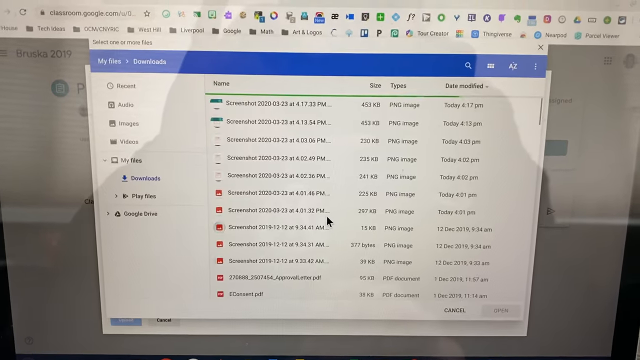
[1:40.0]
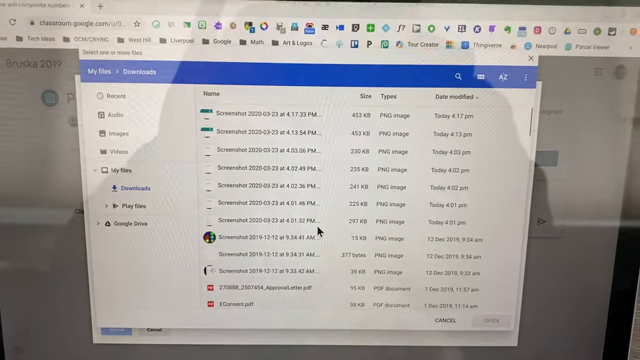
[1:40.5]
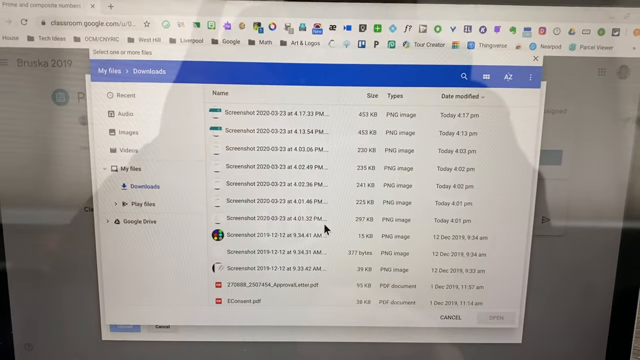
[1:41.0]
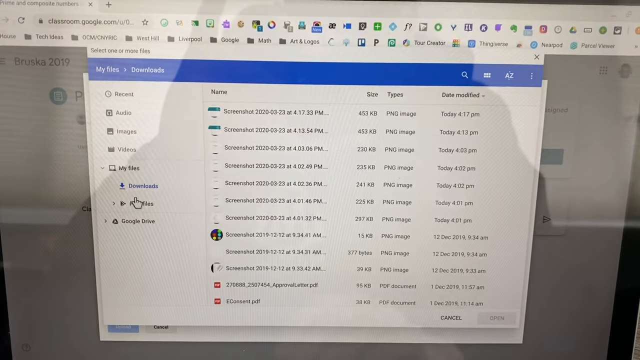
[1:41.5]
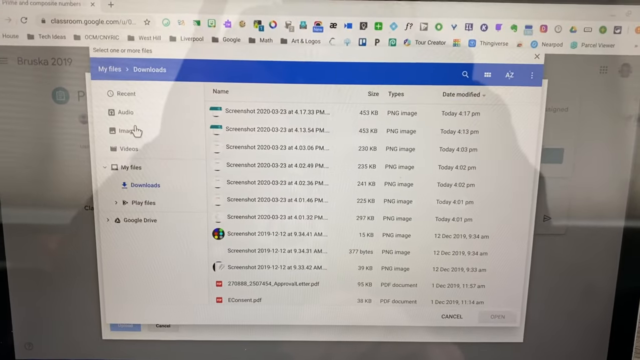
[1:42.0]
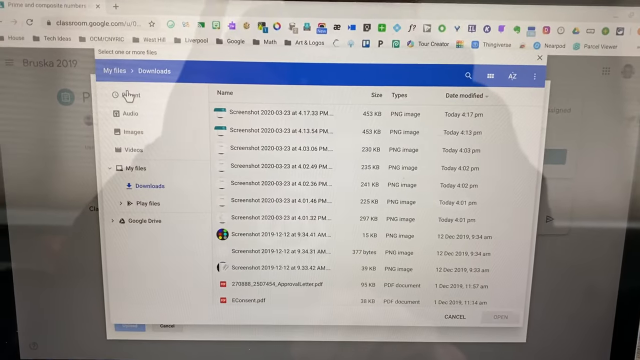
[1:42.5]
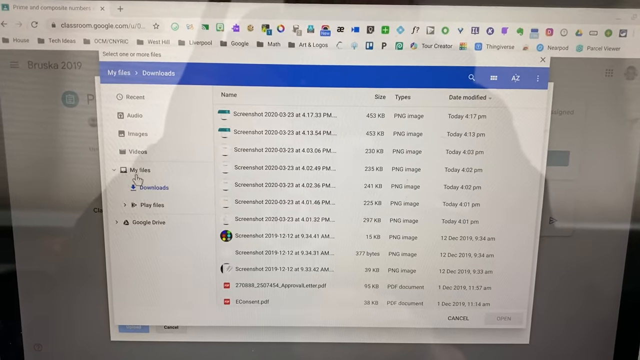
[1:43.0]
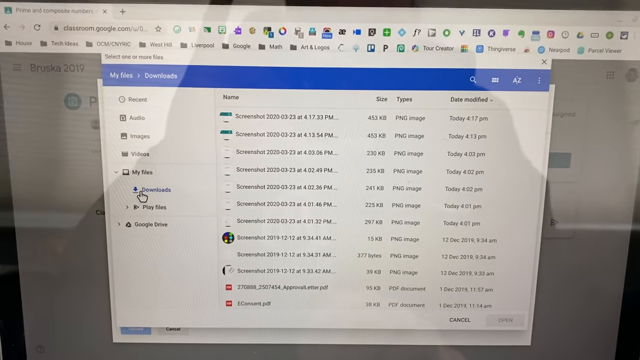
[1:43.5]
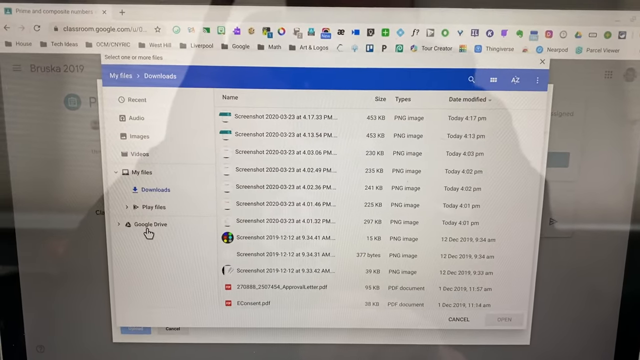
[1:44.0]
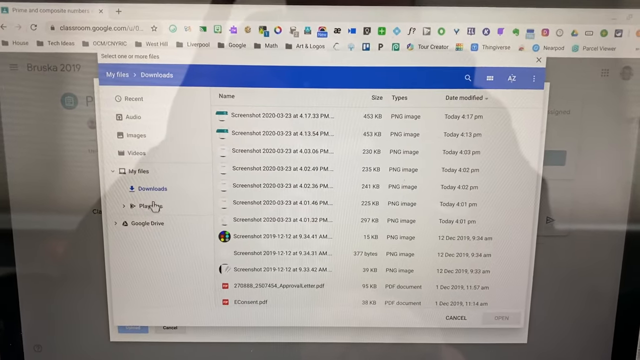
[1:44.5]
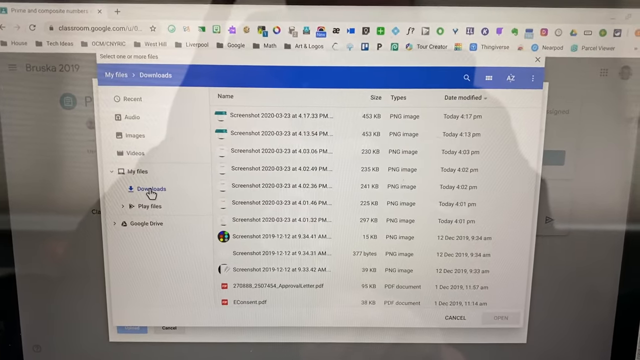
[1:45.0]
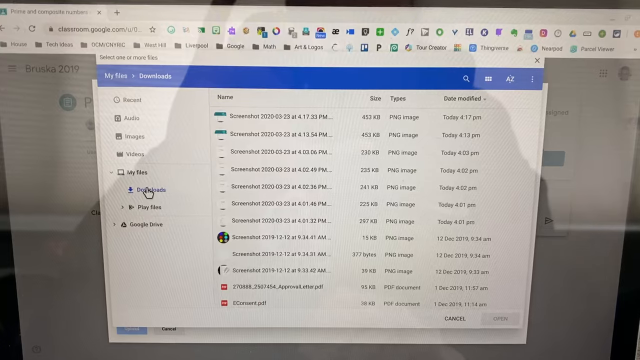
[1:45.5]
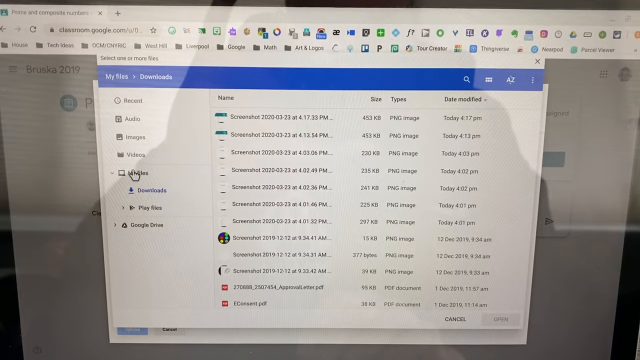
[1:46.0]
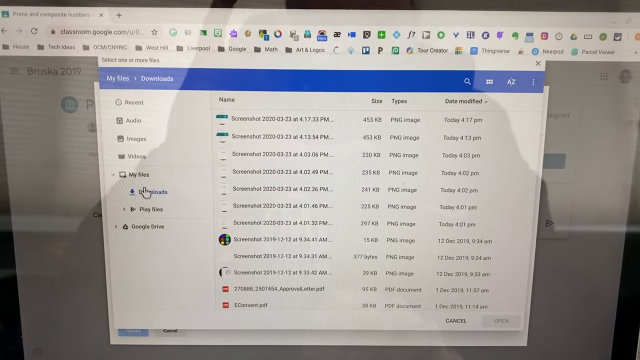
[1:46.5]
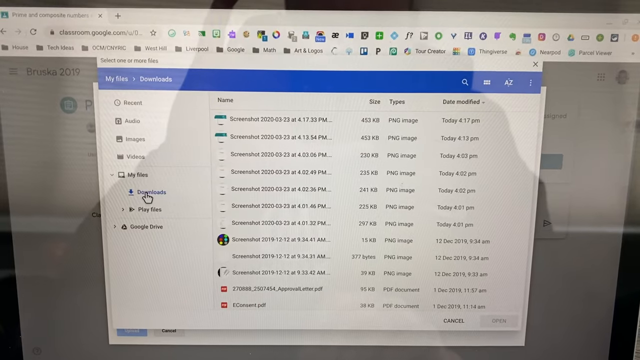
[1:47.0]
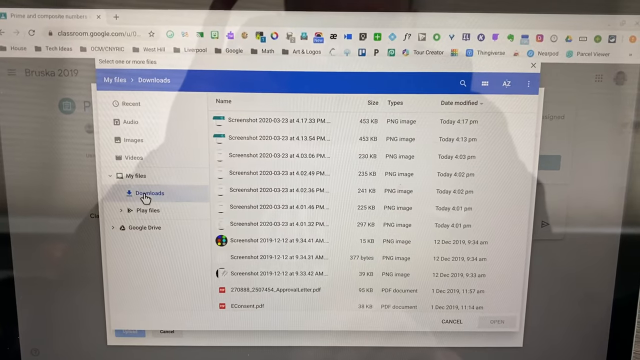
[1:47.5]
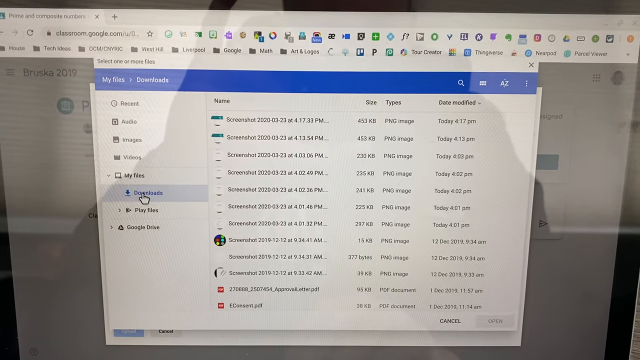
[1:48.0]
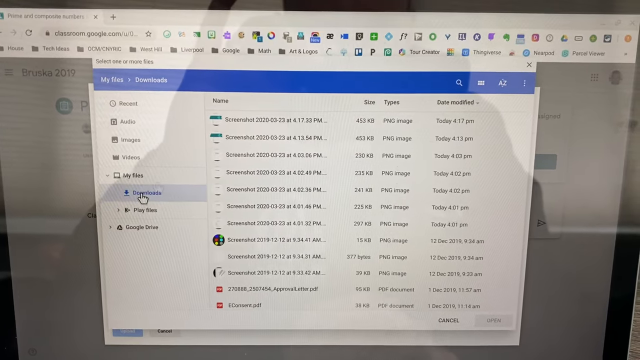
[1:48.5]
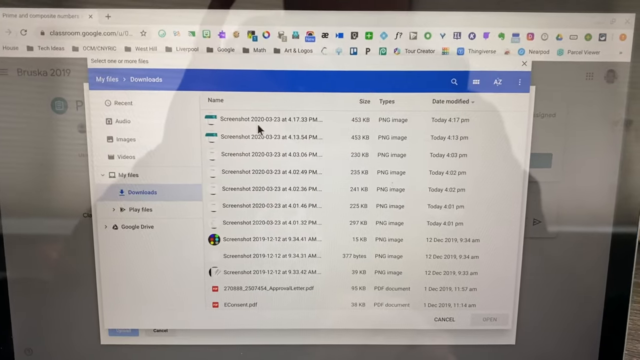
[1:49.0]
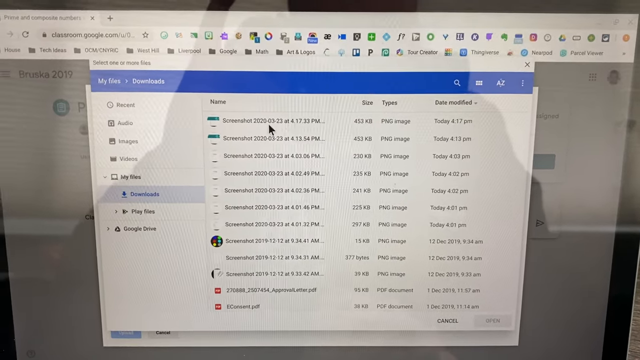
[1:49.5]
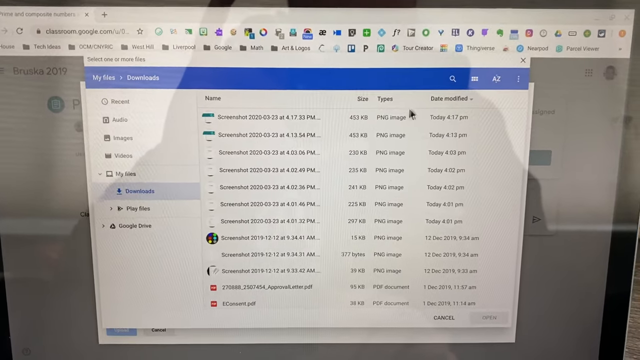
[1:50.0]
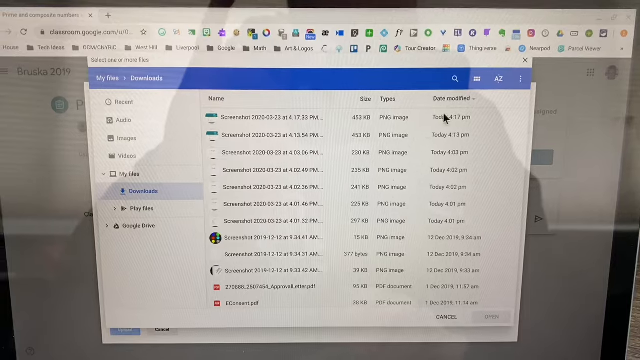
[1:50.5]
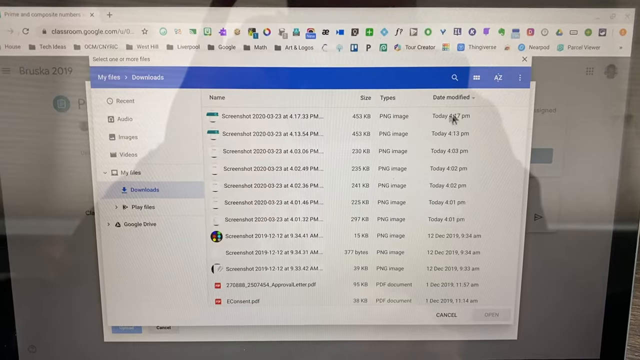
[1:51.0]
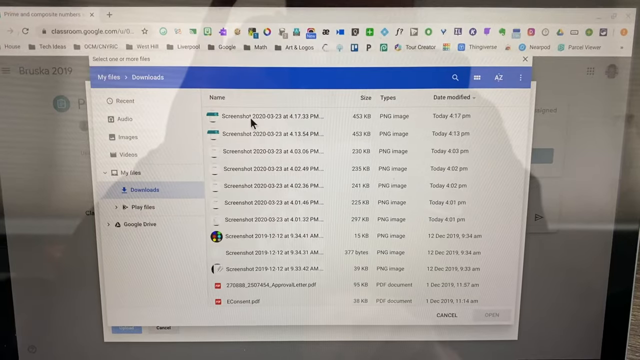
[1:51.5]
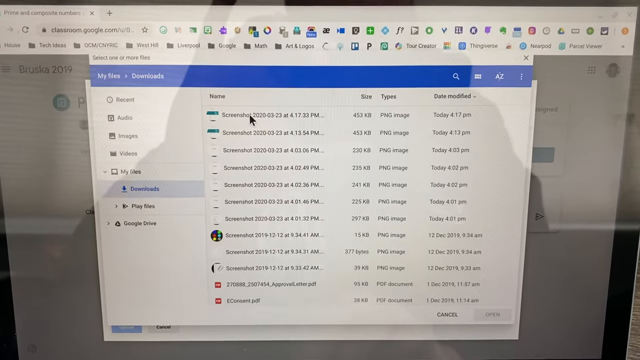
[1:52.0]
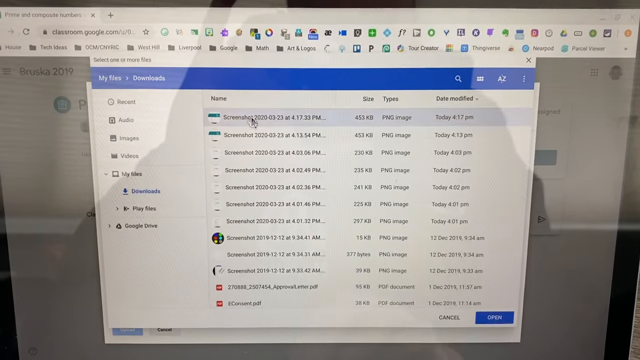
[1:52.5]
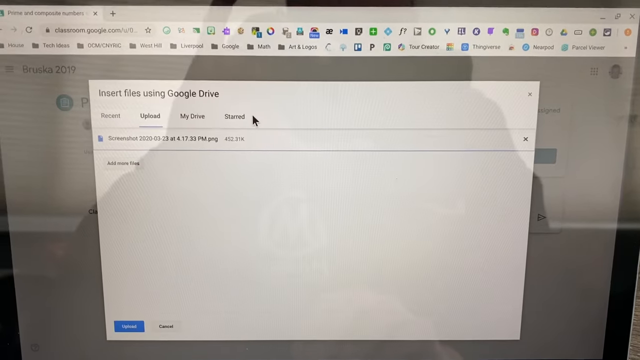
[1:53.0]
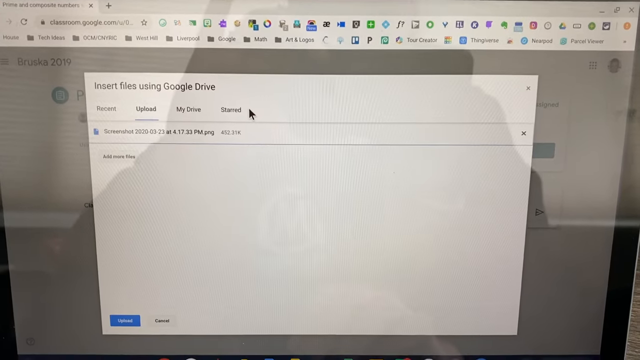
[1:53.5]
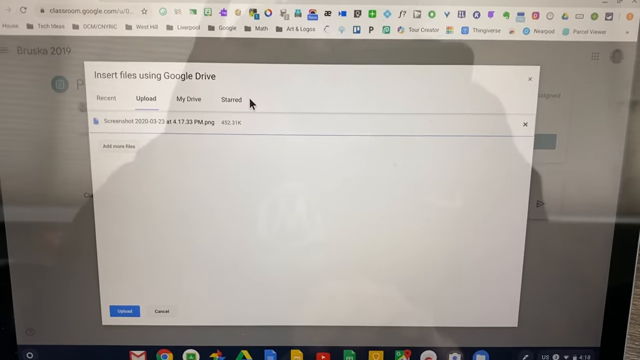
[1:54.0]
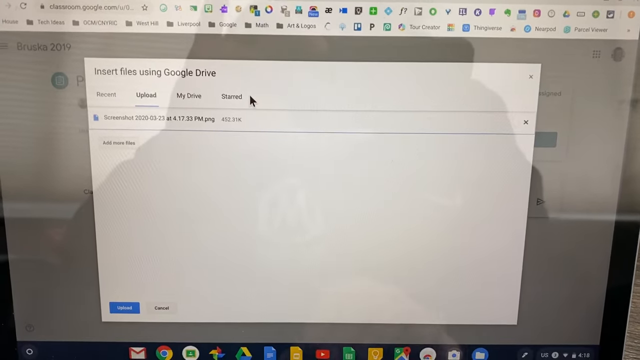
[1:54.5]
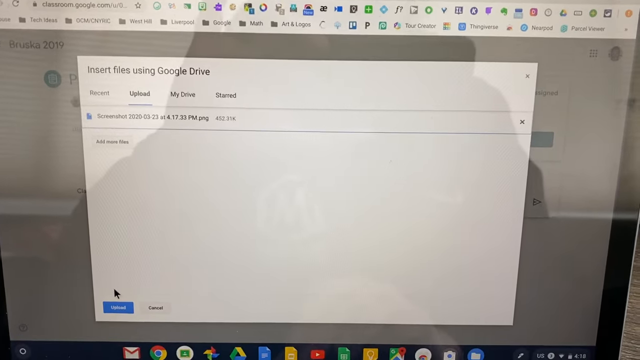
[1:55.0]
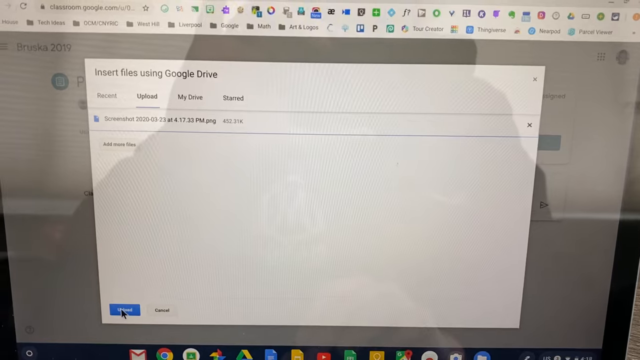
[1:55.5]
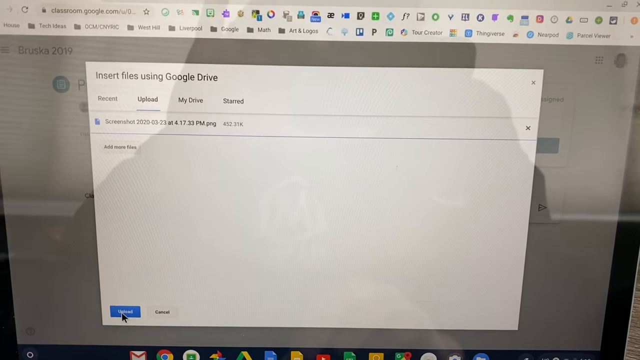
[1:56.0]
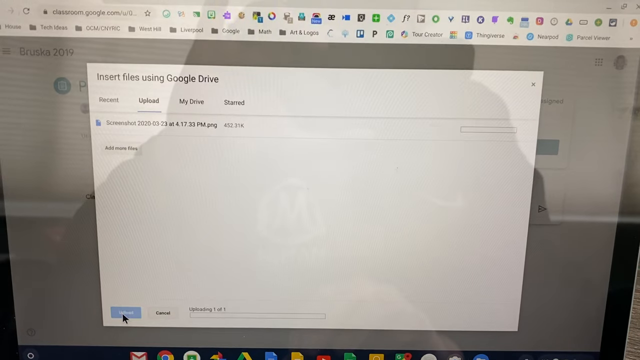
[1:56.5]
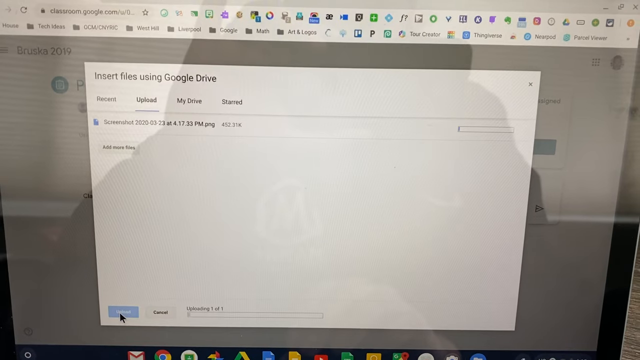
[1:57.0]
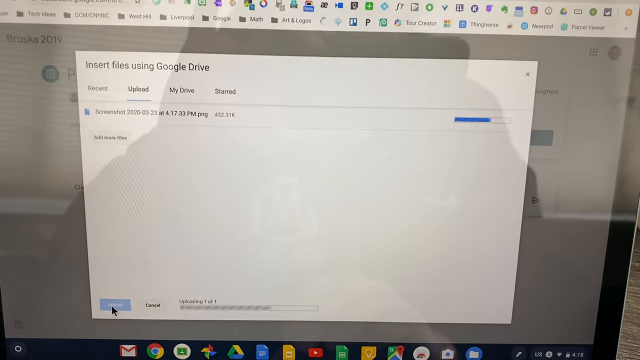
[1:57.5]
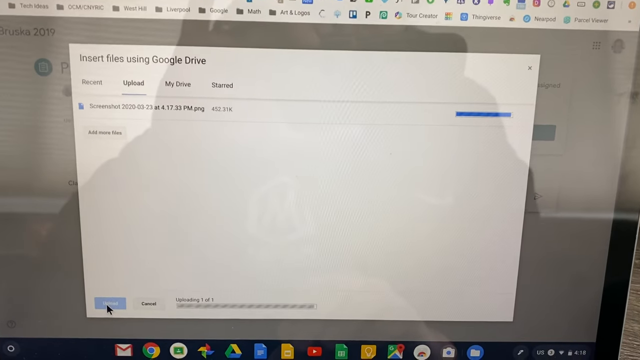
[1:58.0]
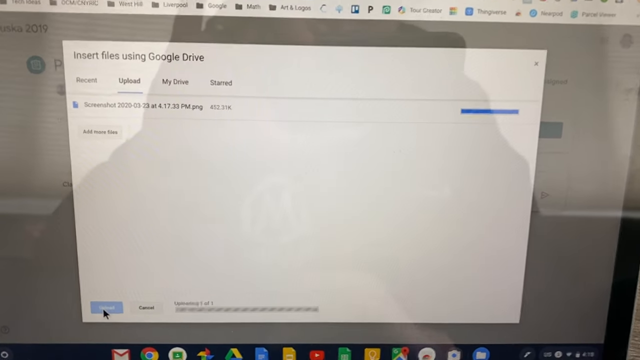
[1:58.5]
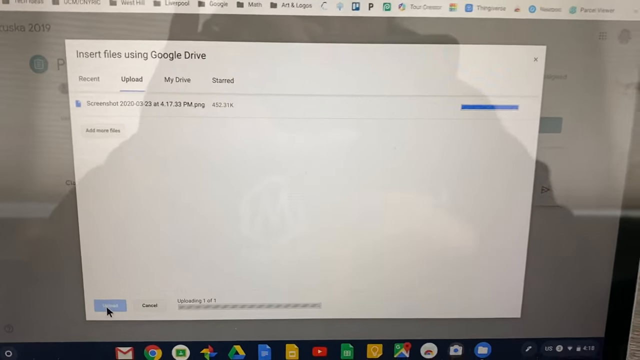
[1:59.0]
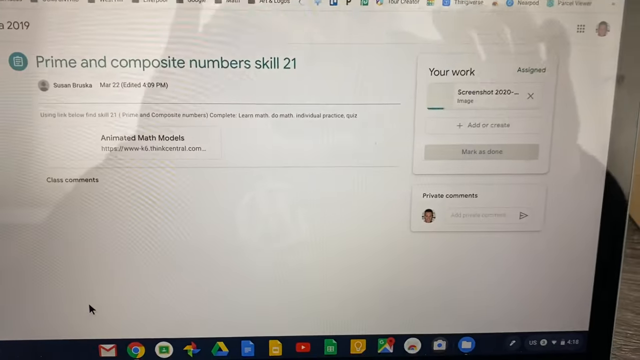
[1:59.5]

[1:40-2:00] The cursor moves up and down the menu on the left, and downloads is clicked. The view scrolls up, and the screenshot taken earlier is clicked, with the time checked to make sure it is the right one. Upload is clicked, and a small window in the upper right-hand corner says "screenshot 2020" with a moving bar showing that it is uploading.